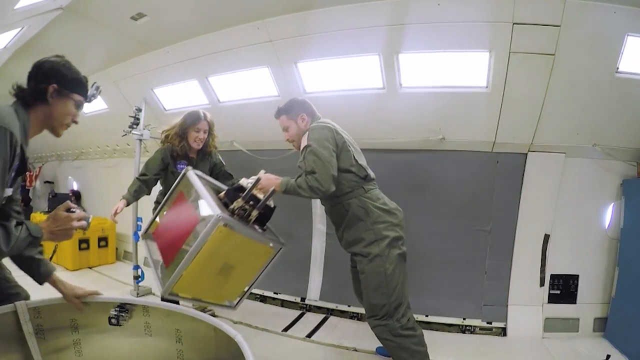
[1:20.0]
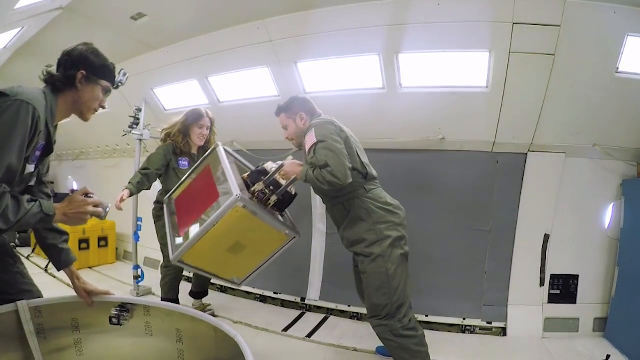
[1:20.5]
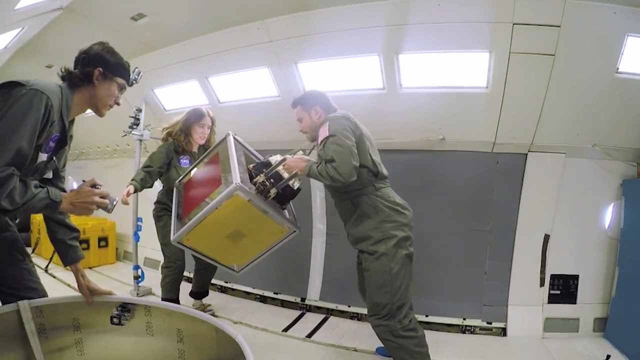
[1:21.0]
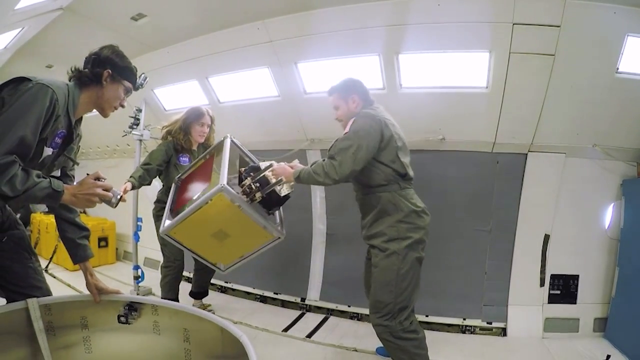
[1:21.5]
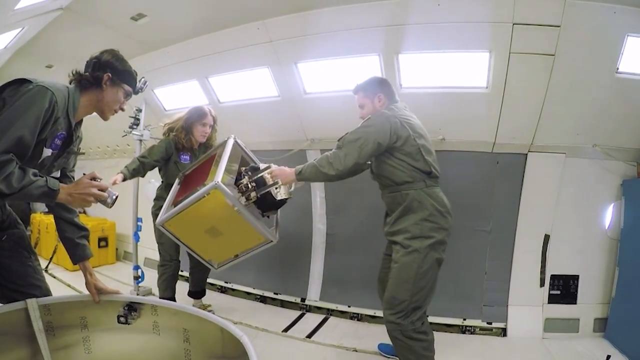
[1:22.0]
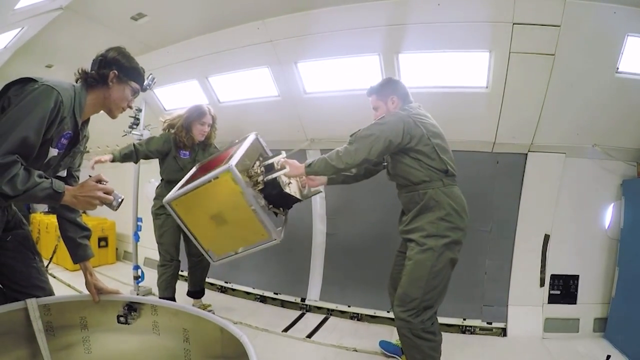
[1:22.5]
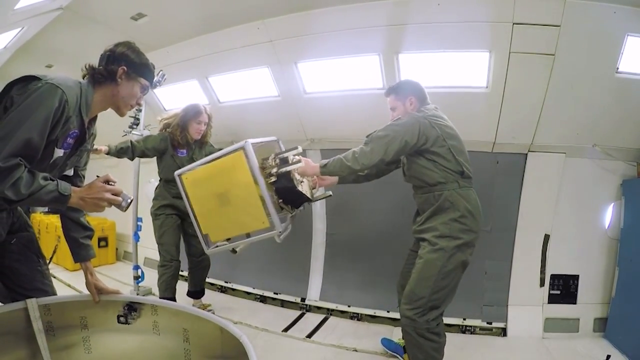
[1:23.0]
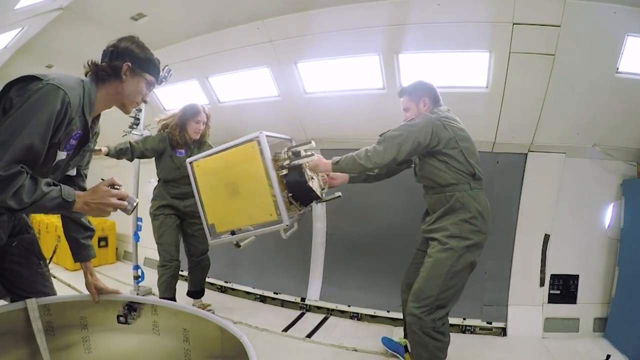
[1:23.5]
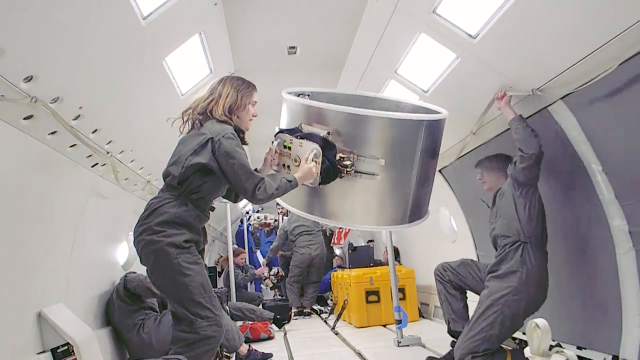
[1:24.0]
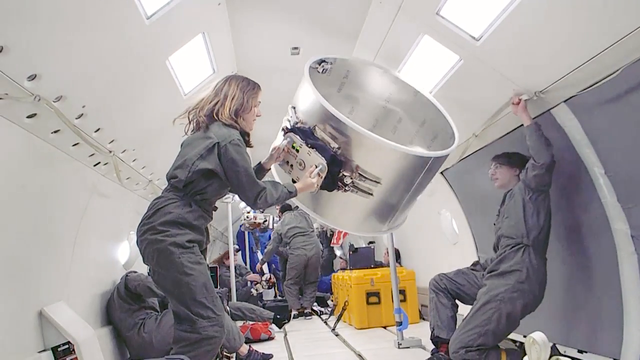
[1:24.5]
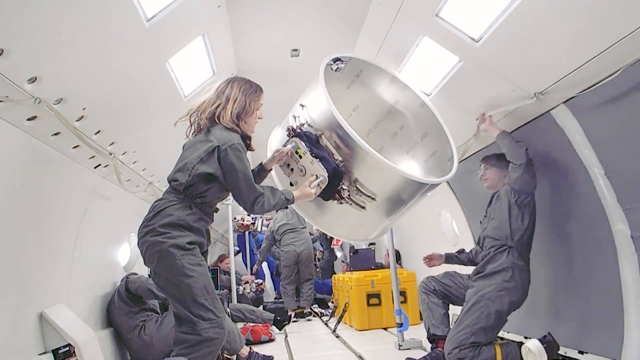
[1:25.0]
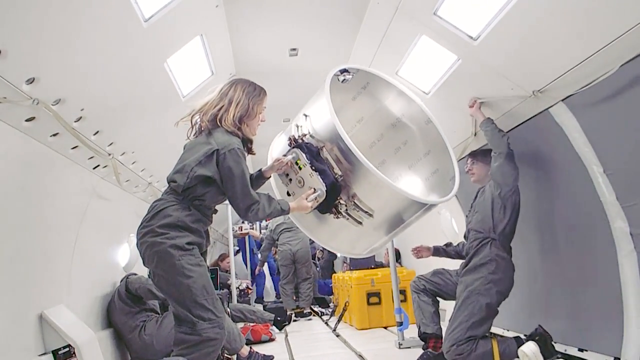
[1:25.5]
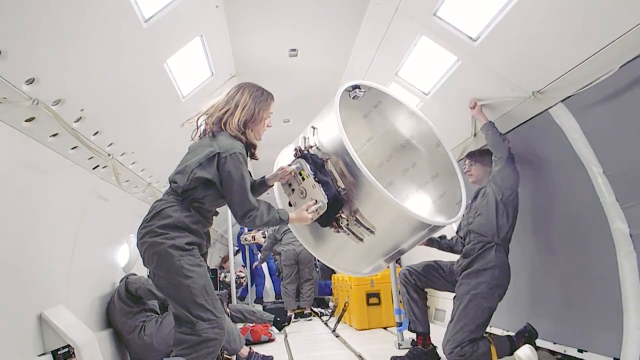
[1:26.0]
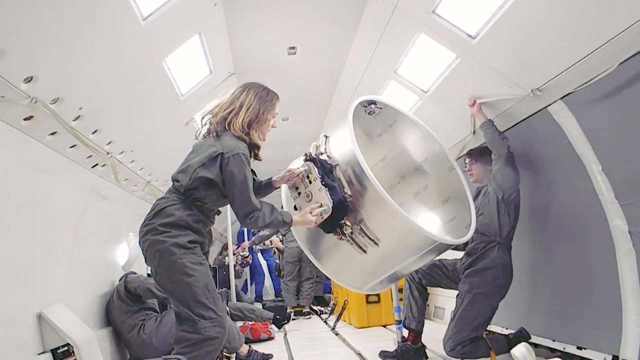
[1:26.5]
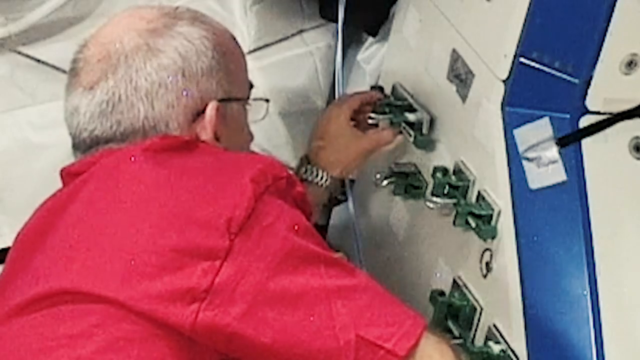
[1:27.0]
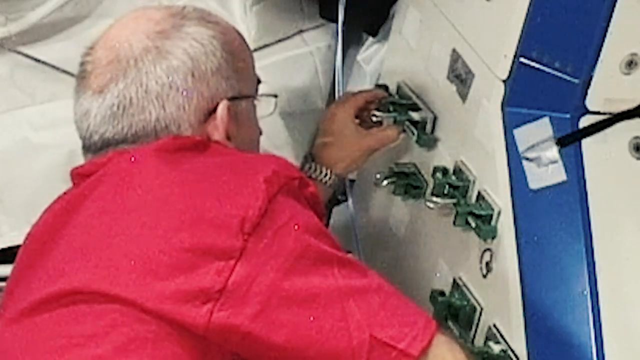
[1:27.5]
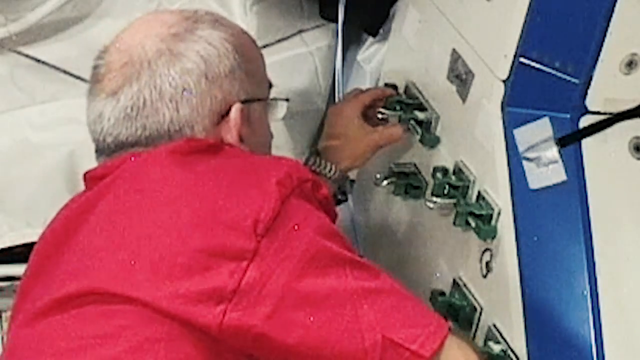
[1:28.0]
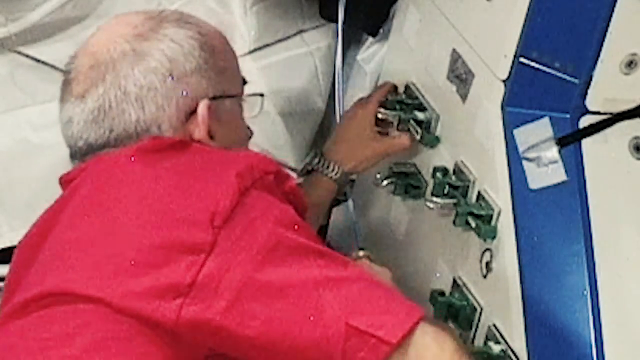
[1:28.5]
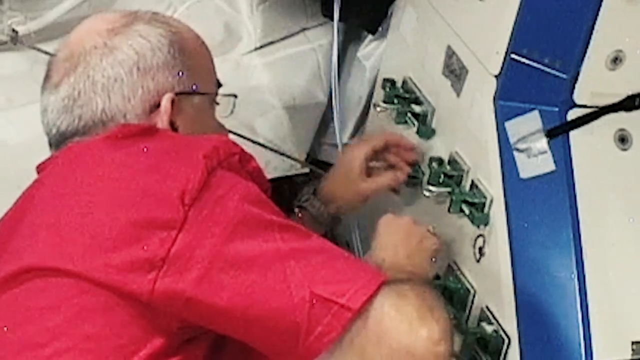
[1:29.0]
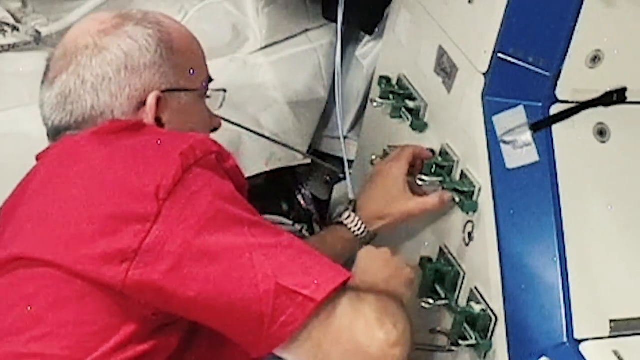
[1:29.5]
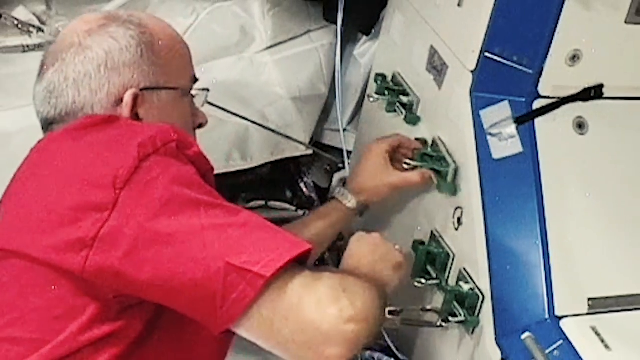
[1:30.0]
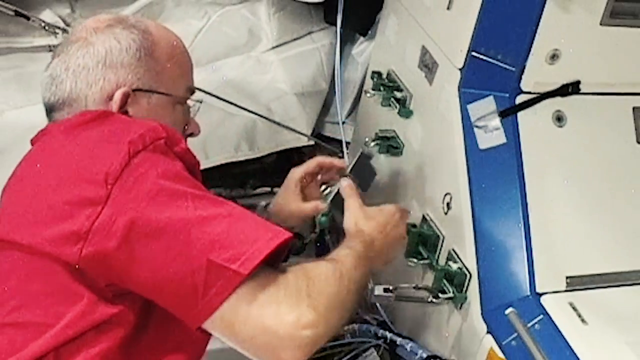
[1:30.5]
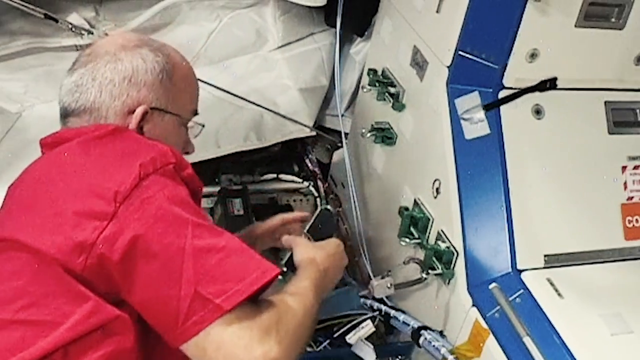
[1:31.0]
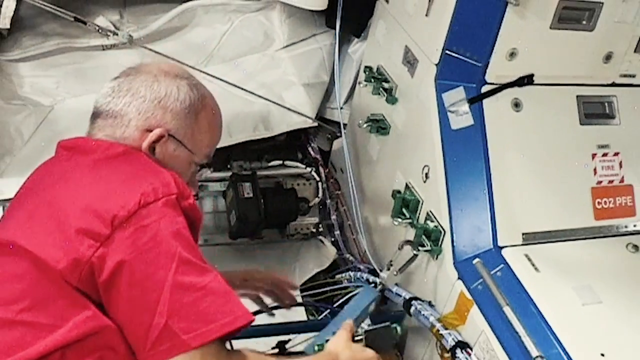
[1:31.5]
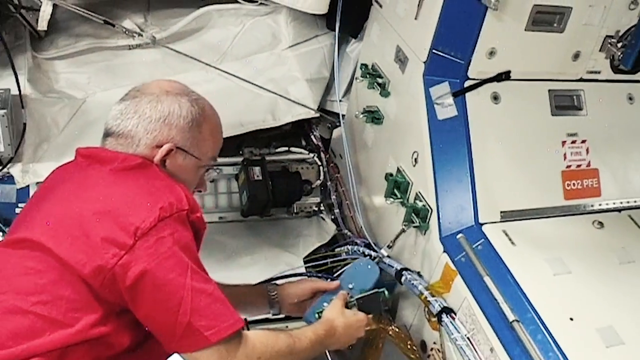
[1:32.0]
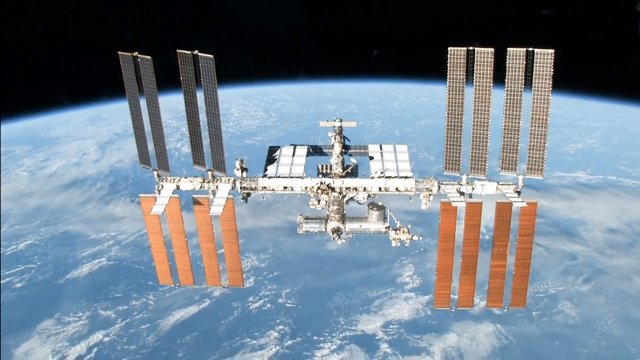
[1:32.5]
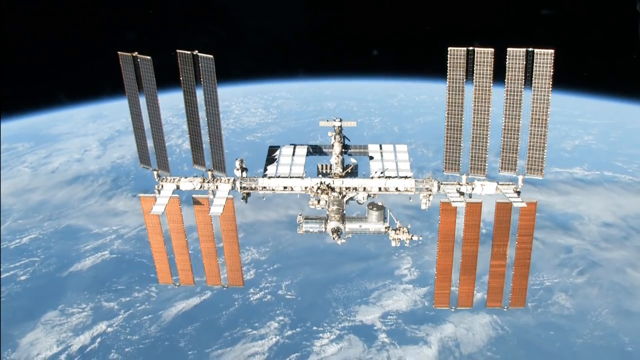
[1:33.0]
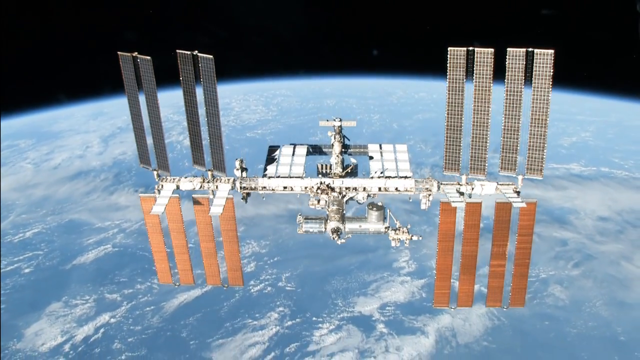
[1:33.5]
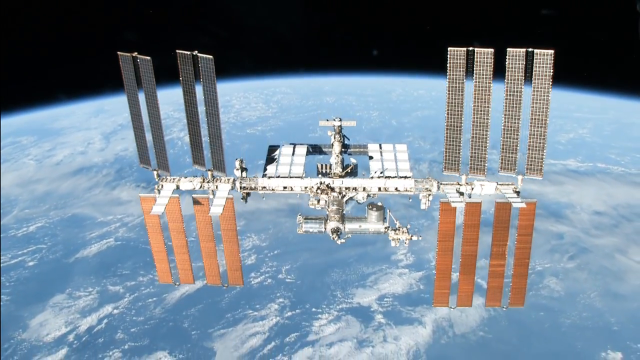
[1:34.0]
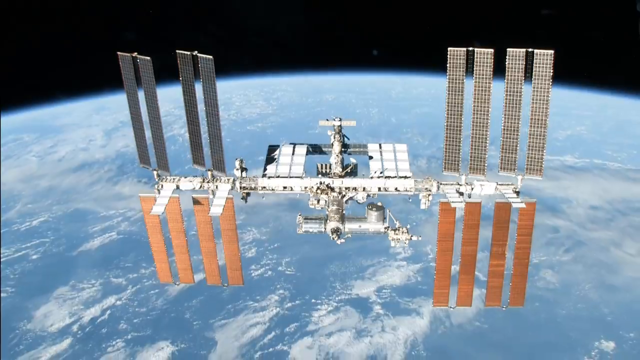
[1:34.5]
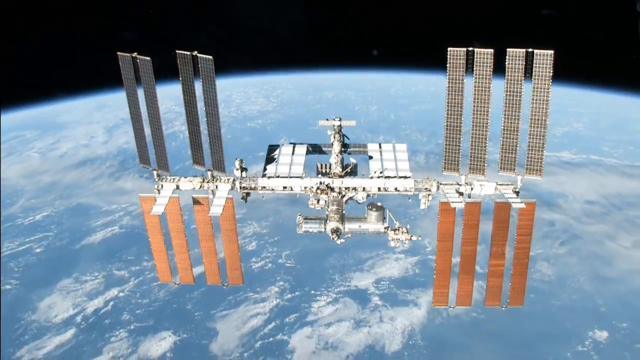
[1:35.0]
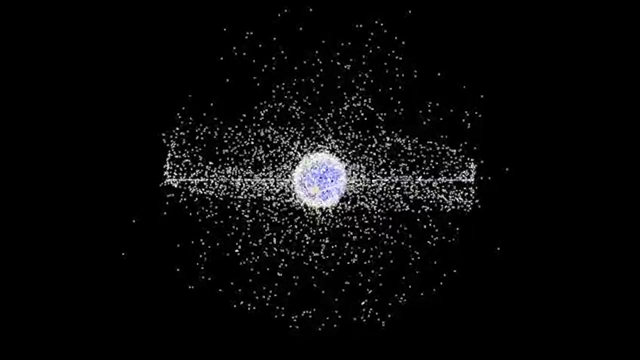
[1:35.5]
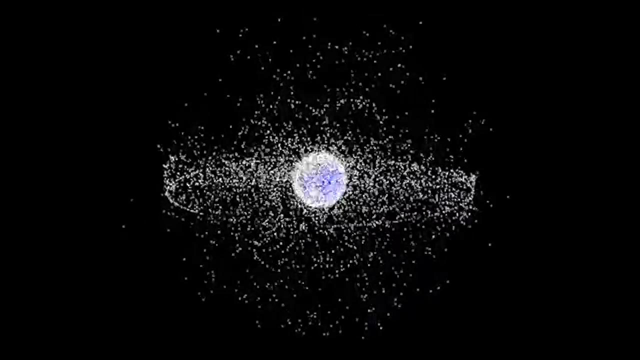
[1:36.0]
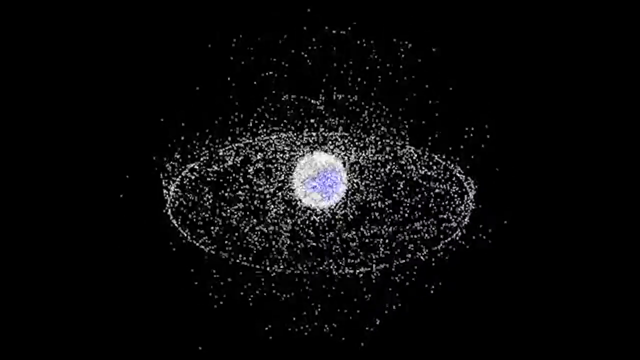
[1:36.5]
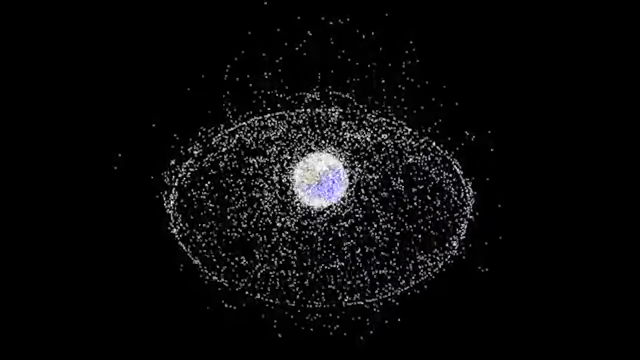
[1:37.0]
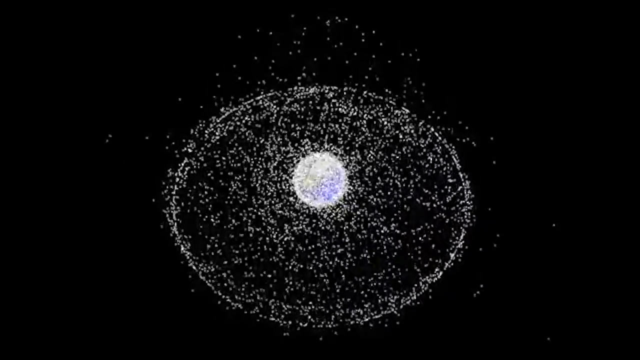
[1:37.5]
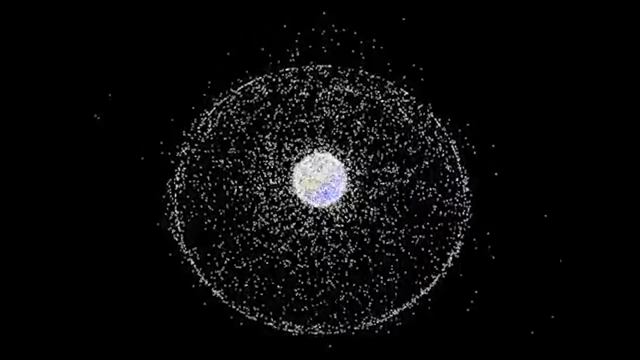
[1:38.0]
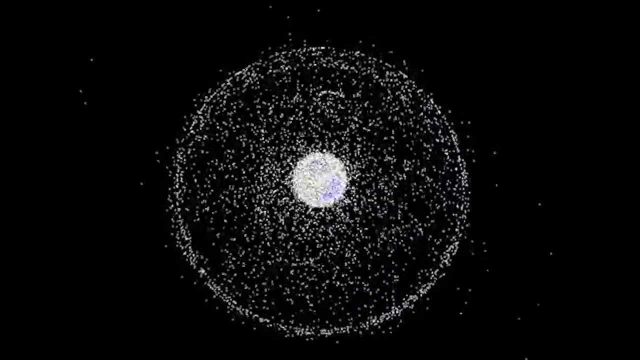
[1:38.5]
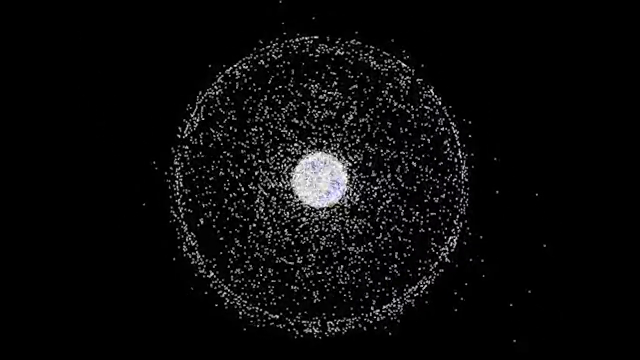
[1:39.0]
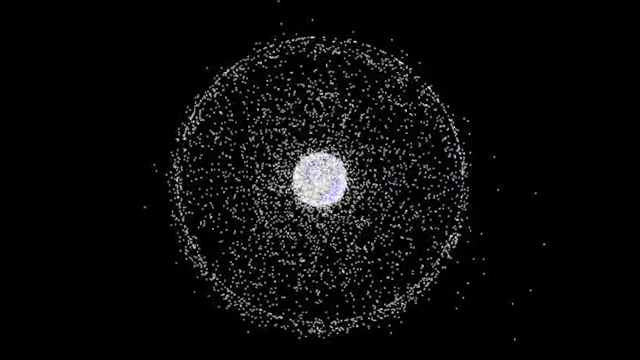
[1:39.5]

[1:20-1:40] Inside a big white tube that is closed off, people wearing gray jumpsuits are floating. Closest to the camera is a woman with long blonde hair, of whom only the right side is visible; she has a suction cup in her hand attached to a very big, round silver cylinder that is floating. On the right side of the screen, a woman with black hair, wearing glasses and a gray jumpsuit, holds on to a cable at the top of the cylinder. The video cuts to a shot of the back of an old man with gray hair who is bald on top. He has glasses, wears a red coat and has a watch on his left wrist; his left hand grabs little metal squares attached to the inside of the cylinder, and he presses those squares onto the metal cylinder. The video then cuts to a shot outside the space station, showing the station with eight things that look like solar panels on the right side: the four on the bottom side are orange and the four on the top side are gray. The Earth is rotating in the background.